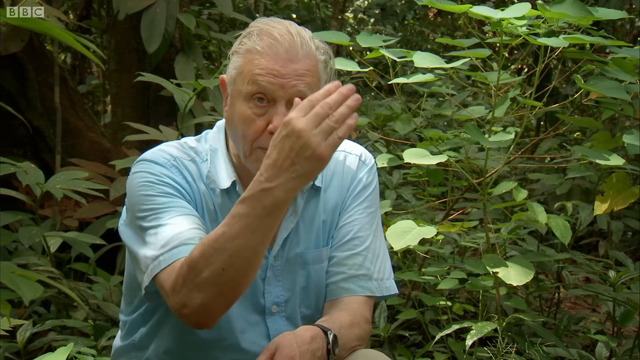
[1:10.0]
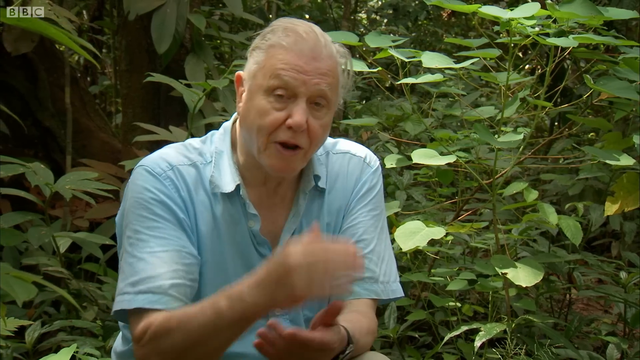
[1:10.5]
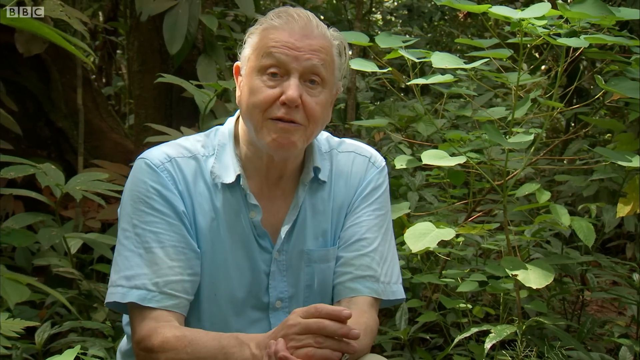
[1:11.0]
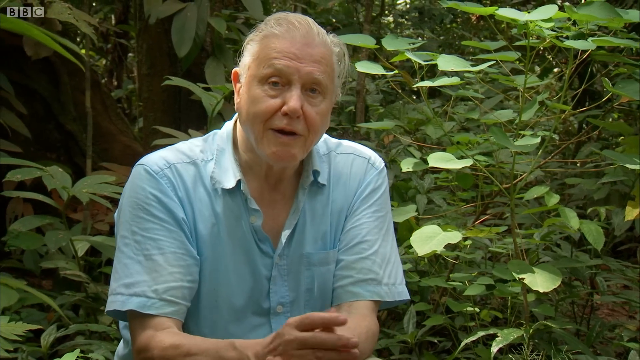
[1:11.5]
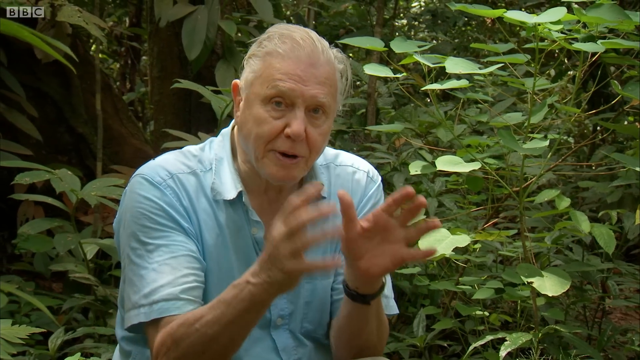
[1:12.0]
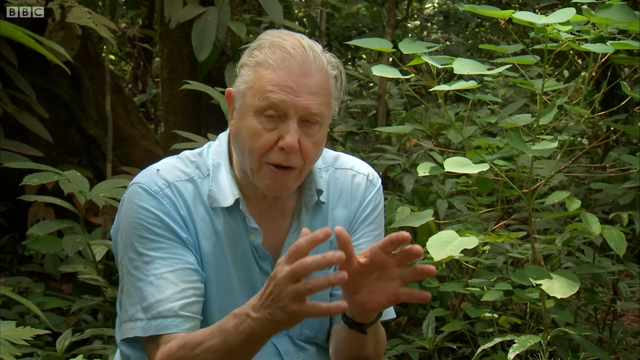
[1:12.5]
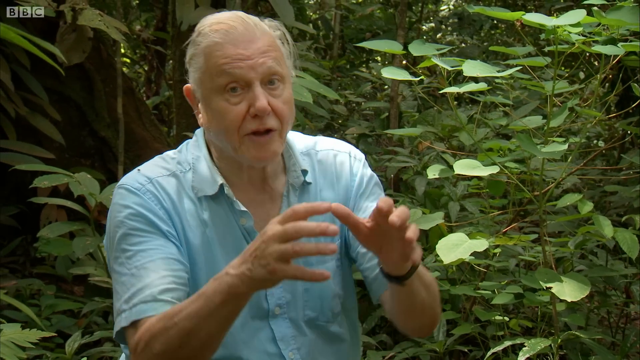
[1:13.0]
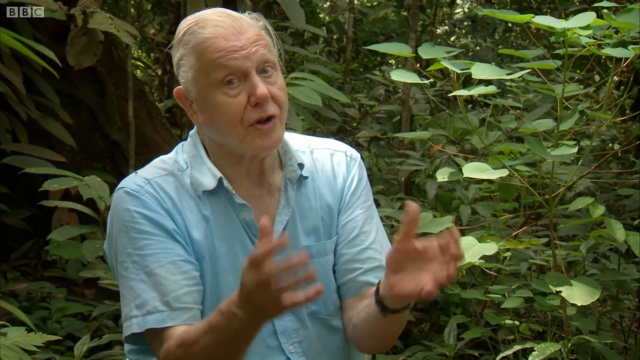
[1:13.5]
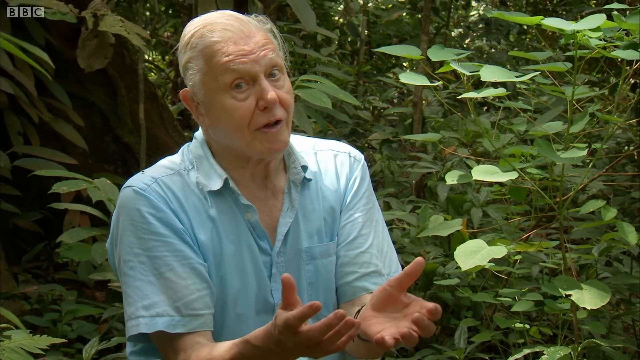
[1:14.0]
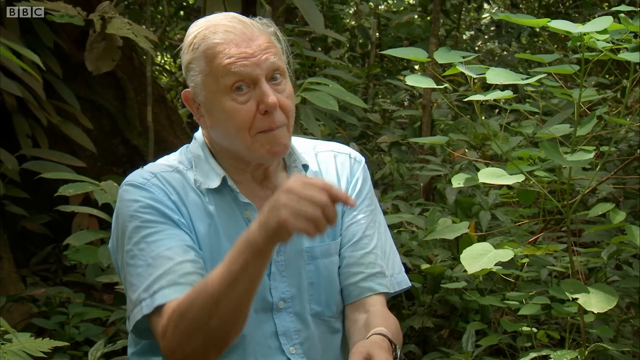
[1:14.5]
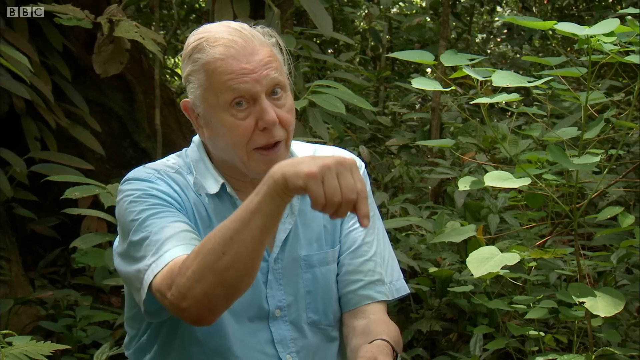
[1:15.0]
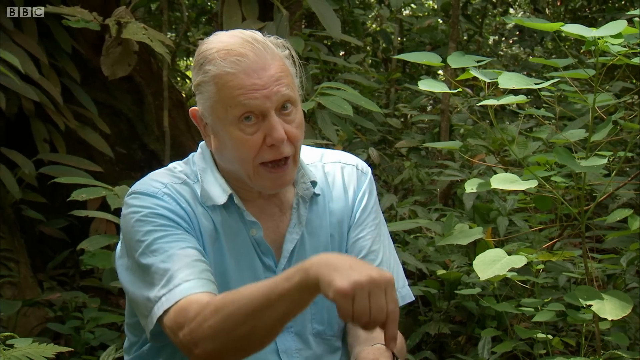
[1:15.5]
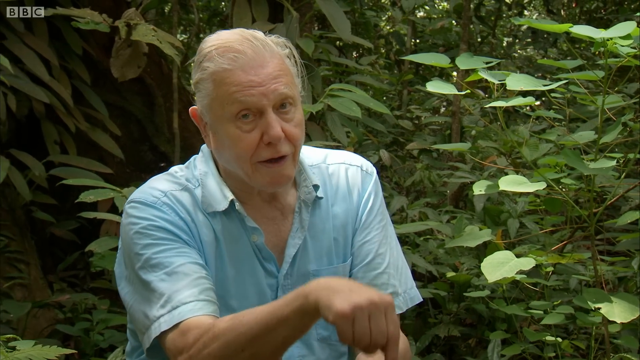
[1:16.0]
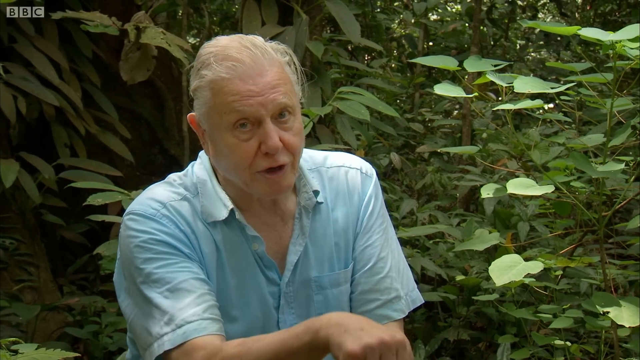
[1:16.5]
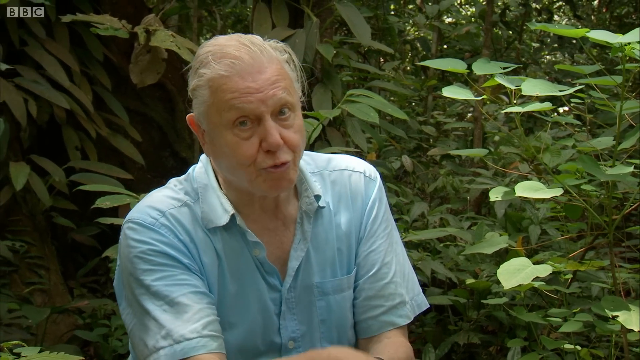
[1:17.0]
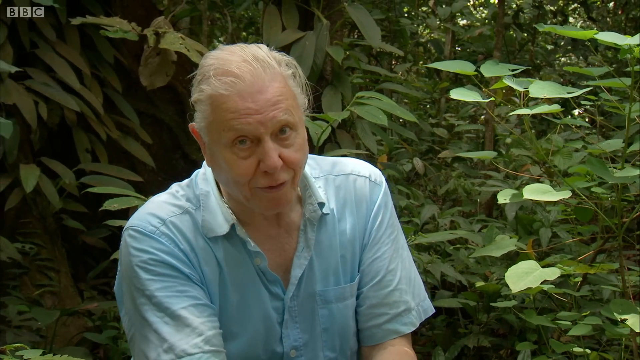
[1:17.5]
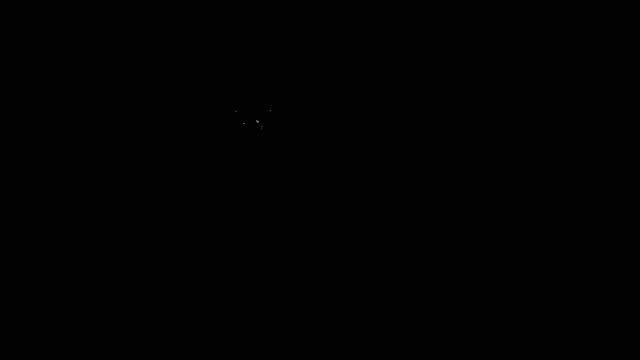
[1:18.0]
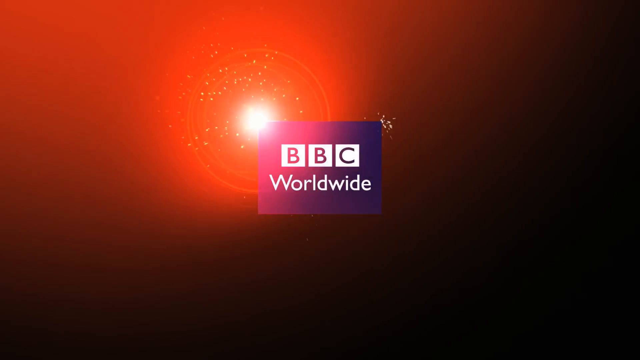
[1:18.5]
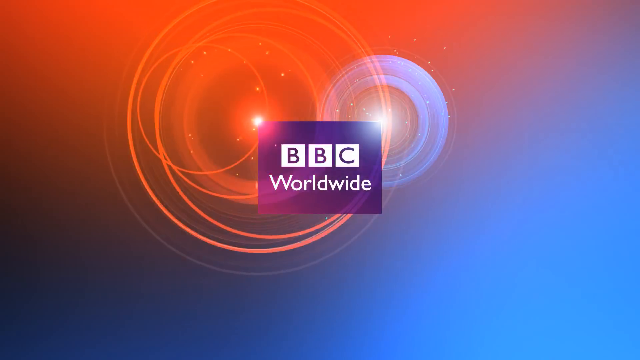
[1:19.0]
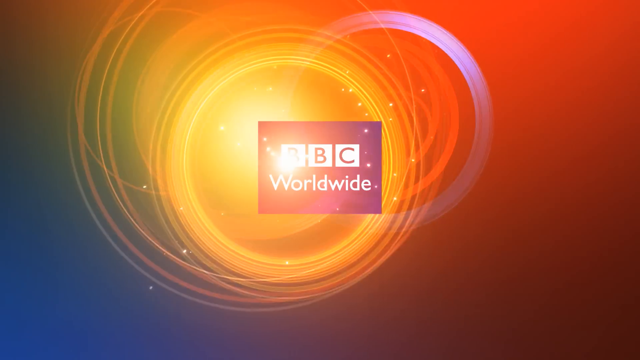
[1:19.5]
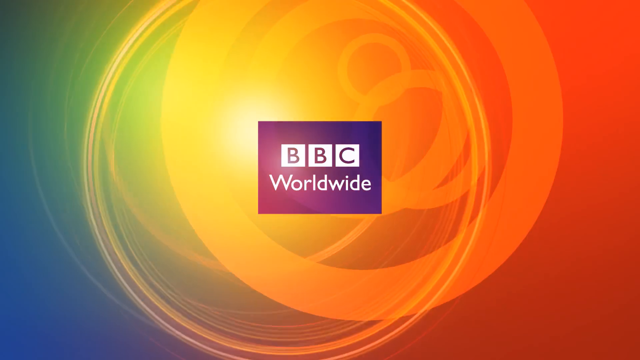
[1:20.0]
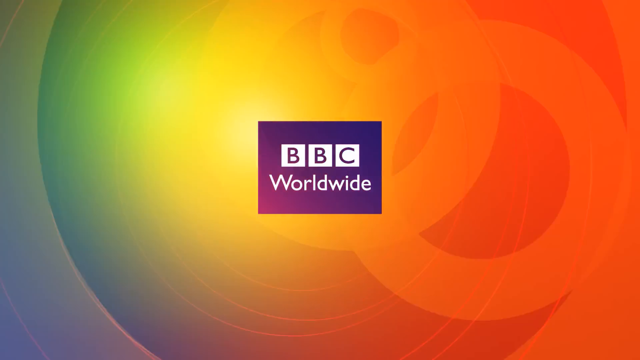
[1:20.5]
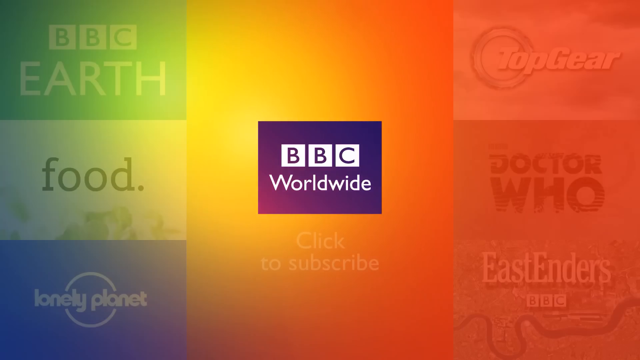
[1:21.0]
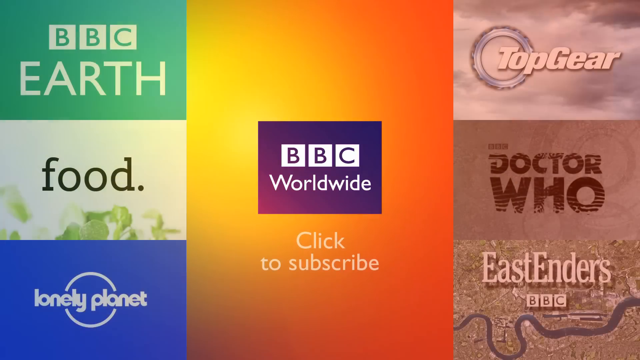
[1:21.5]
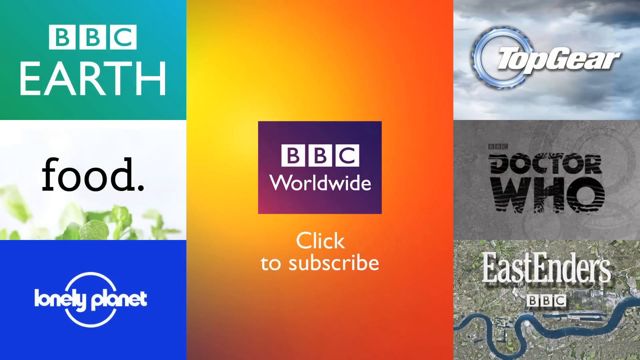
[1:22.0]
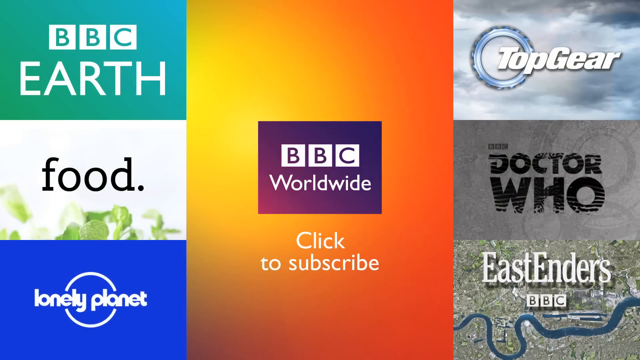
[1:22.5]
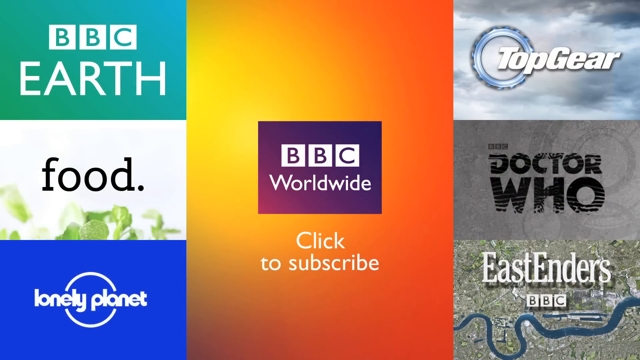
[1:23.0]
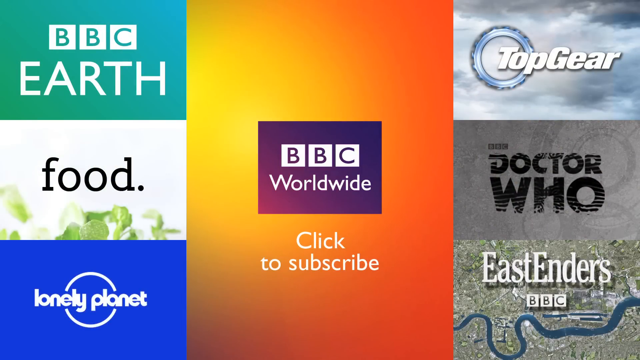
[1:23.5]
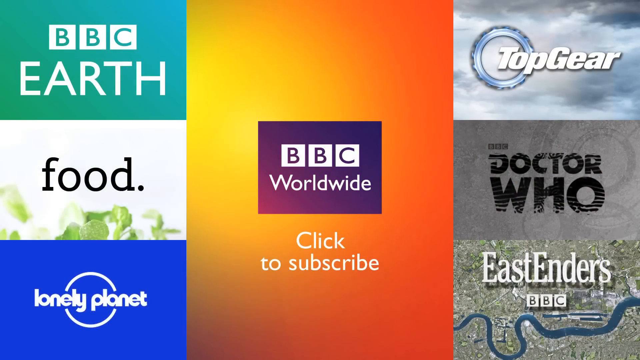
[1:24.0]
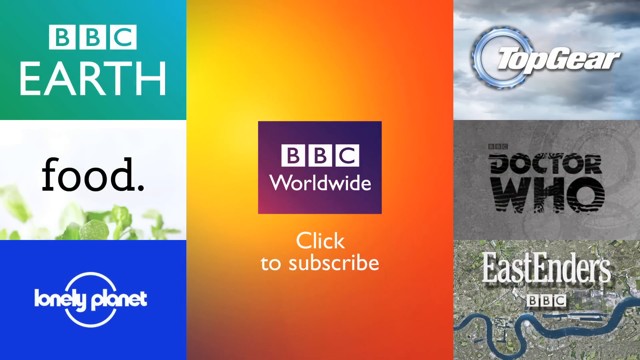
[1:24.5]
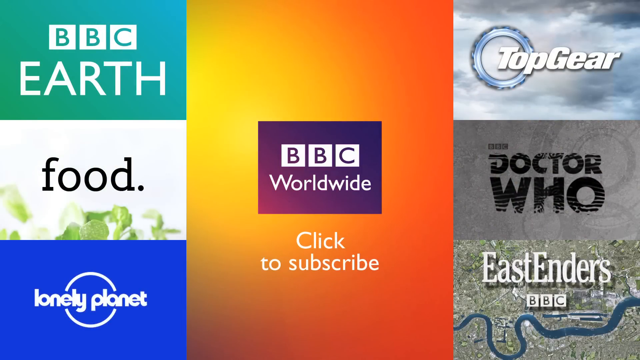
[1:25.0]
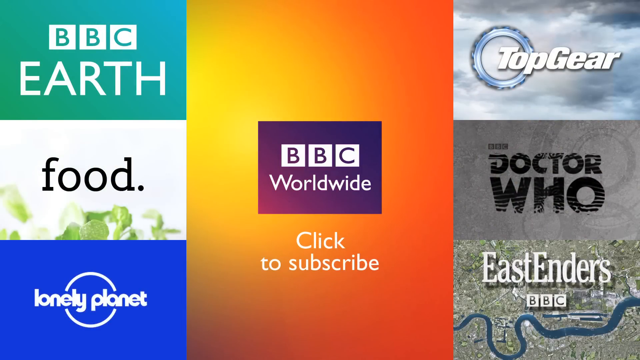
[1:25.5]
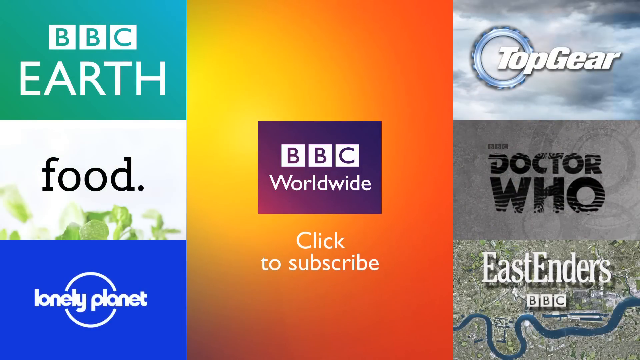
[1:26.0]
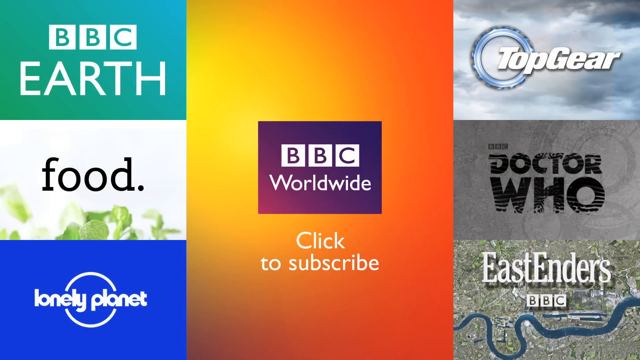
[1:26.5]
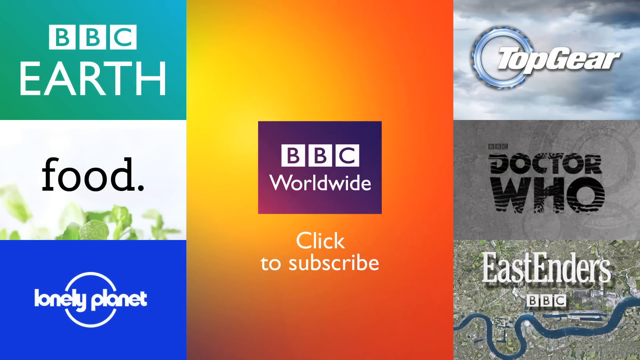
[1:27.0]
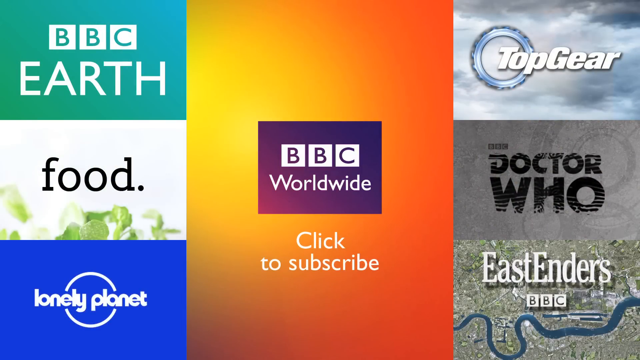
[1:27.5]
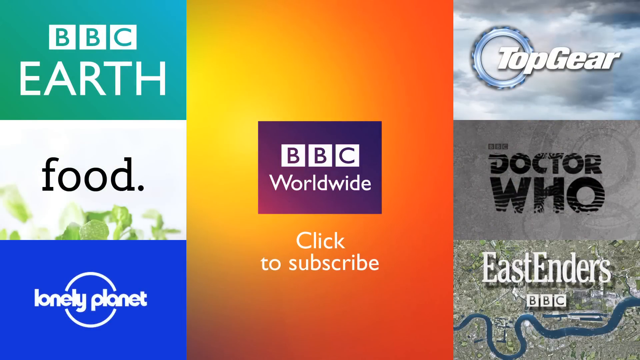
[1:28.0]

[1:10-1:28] The man in the light blue shirt talks to the camera, with the camera zoomed in on his head and torso. The video then cuts to a screen with a purple rectangle in the center containing "BBC Worldwide" in white text, and below that "click to subscribe" in white text. On the left side of the screen are two videos: one reads "incredible poison arrow frog raises tadpoles" and the one below reads "extraordinary lion hunt filmed Attenborough." The BBC Earth logo is in a green circle in the bottom right corner. In the background is a collage of what appear to be different BBC shows, including Top Gear, Doctor Who, and Lonely Planet.